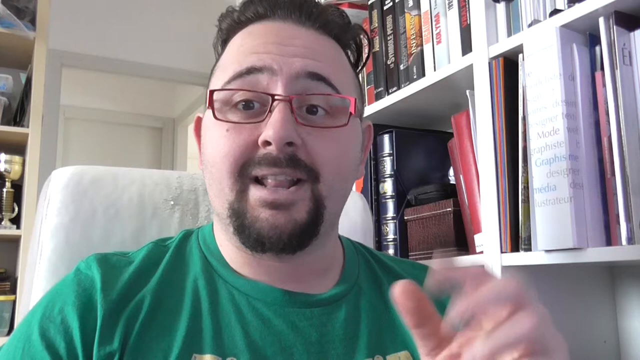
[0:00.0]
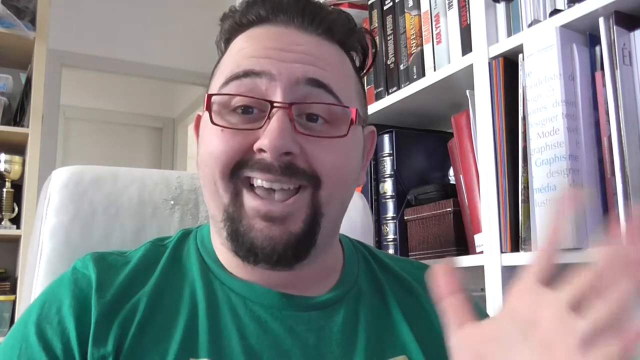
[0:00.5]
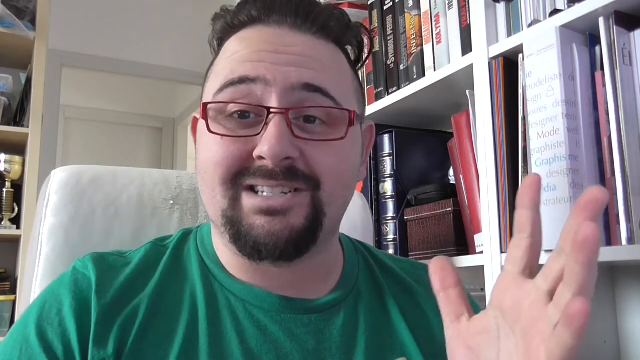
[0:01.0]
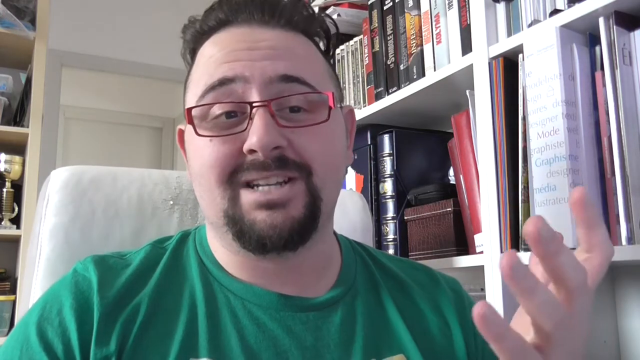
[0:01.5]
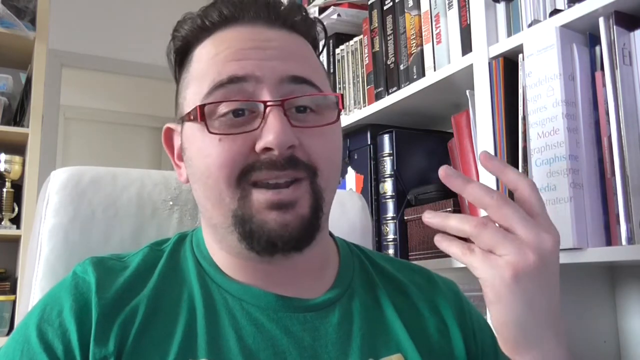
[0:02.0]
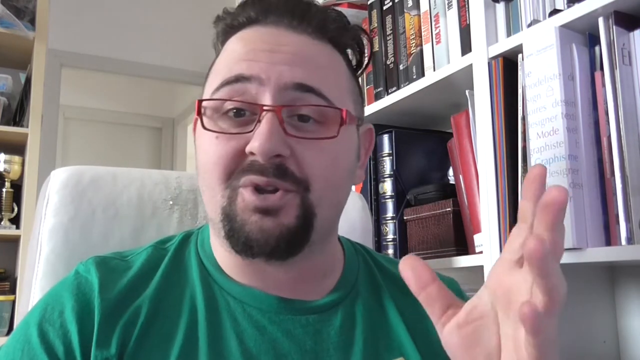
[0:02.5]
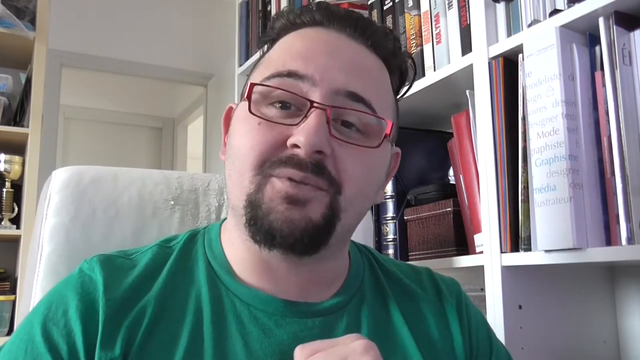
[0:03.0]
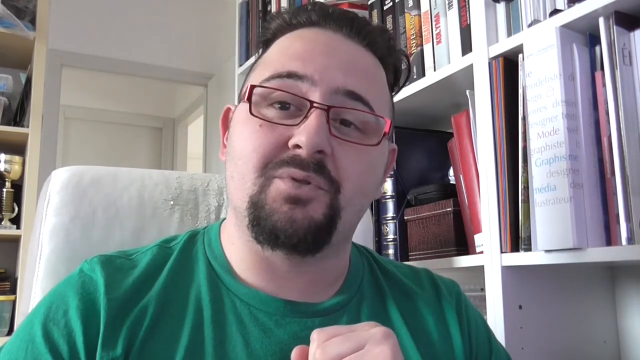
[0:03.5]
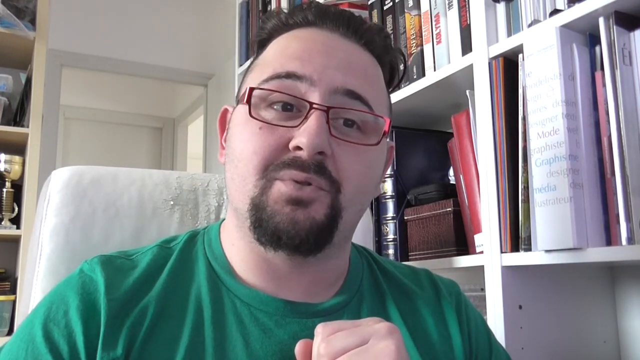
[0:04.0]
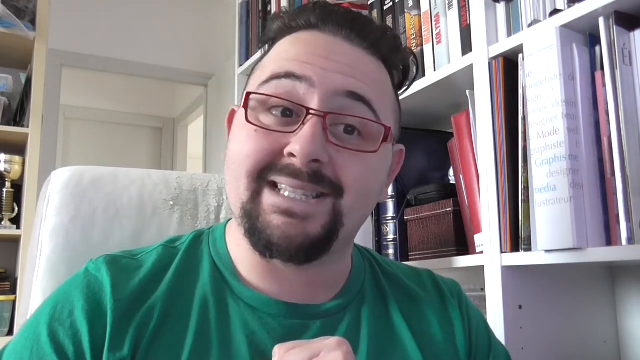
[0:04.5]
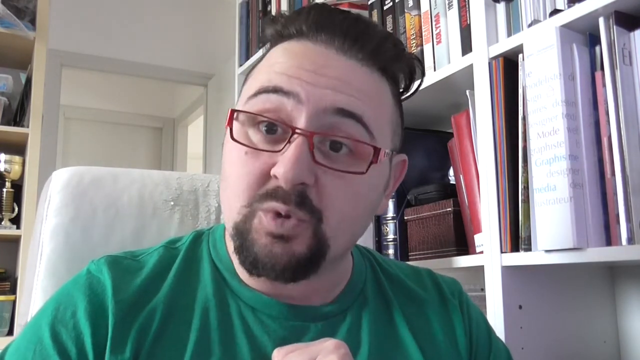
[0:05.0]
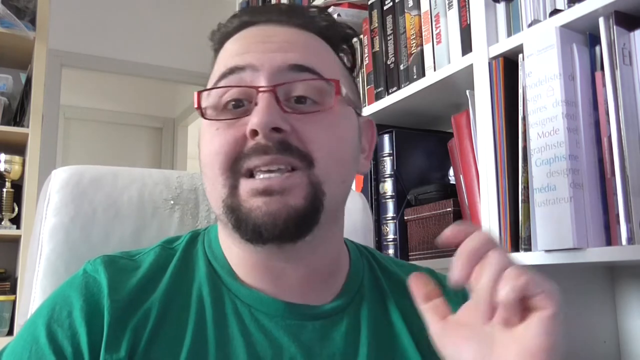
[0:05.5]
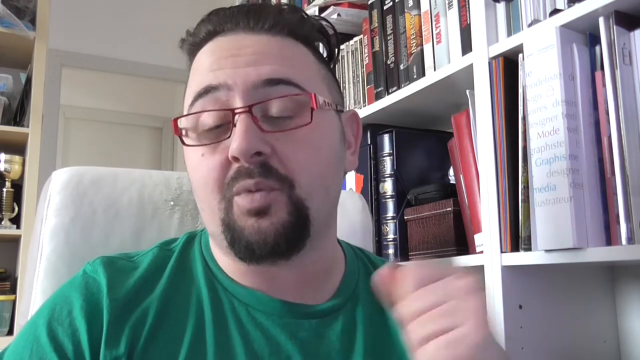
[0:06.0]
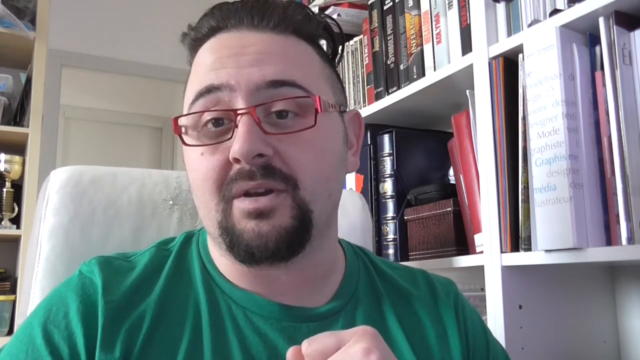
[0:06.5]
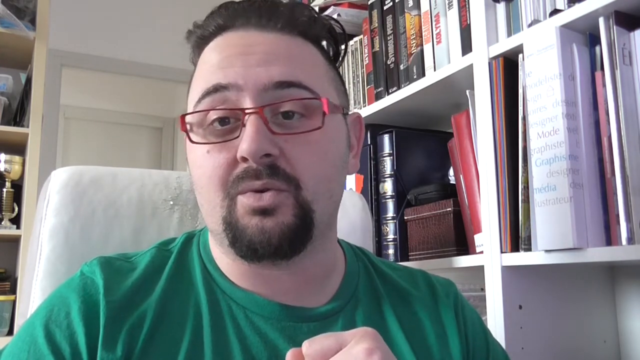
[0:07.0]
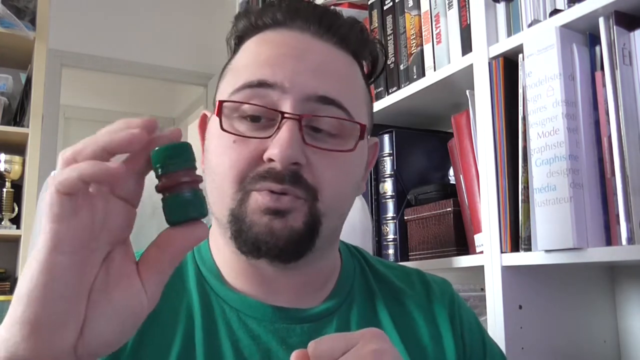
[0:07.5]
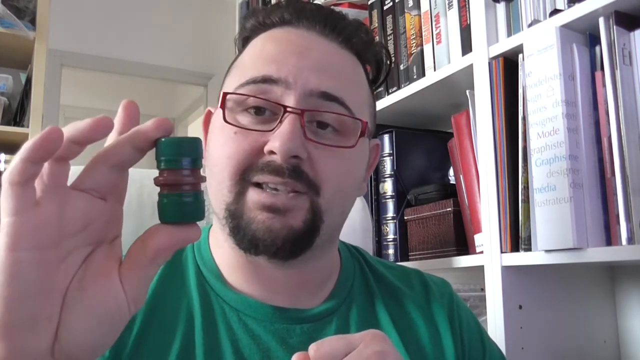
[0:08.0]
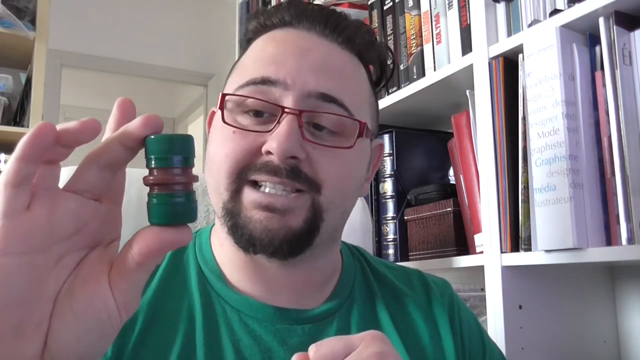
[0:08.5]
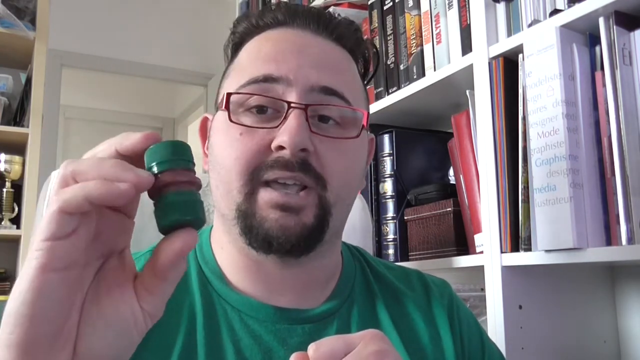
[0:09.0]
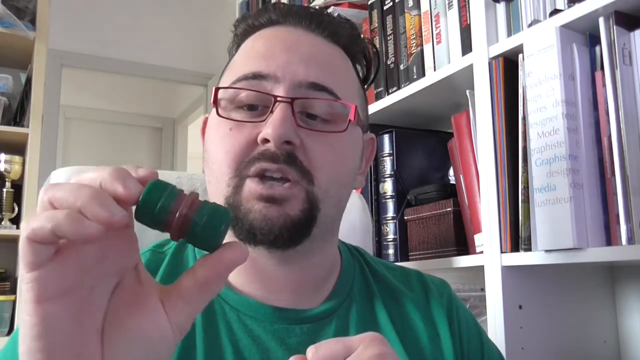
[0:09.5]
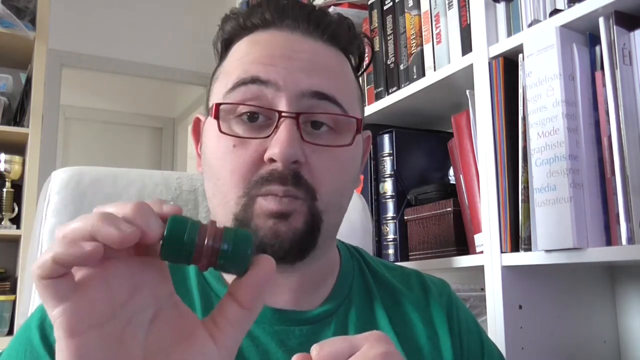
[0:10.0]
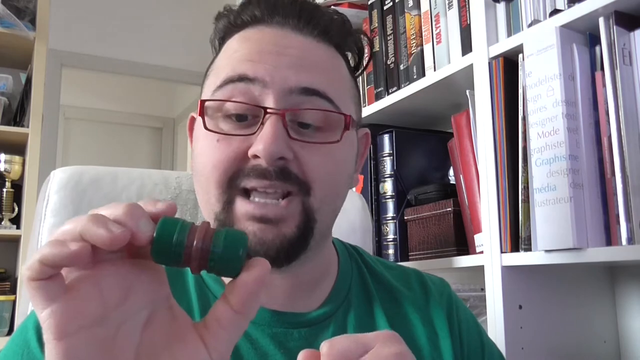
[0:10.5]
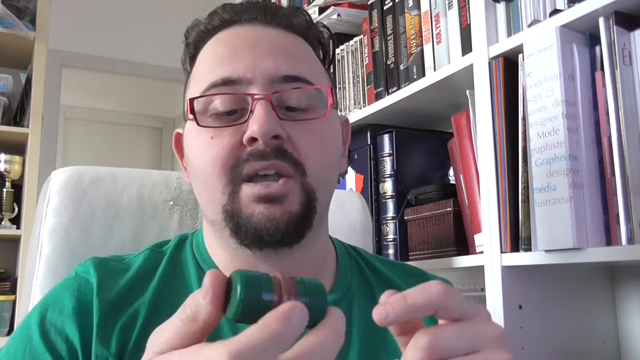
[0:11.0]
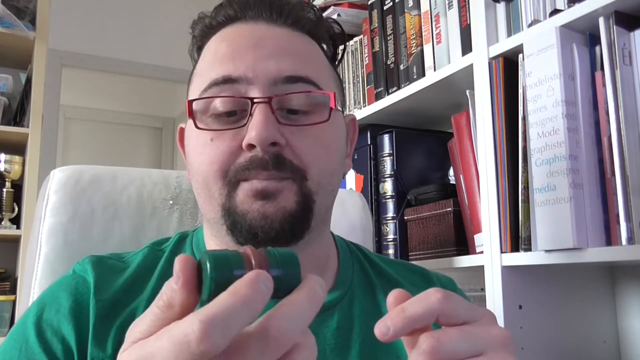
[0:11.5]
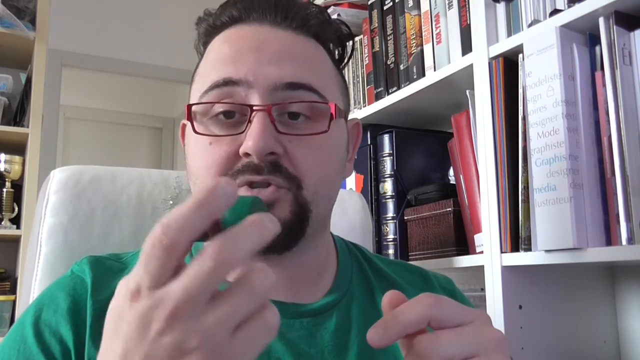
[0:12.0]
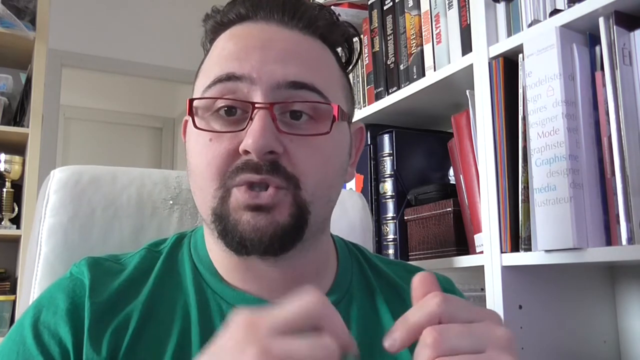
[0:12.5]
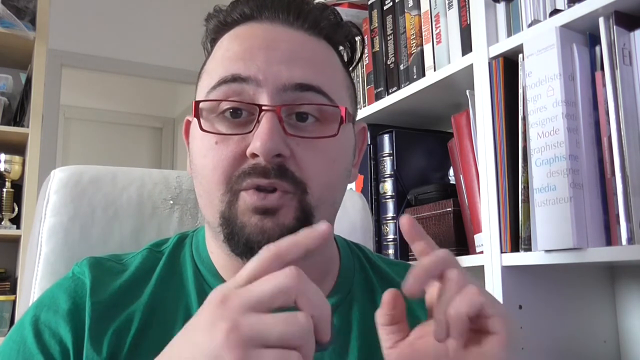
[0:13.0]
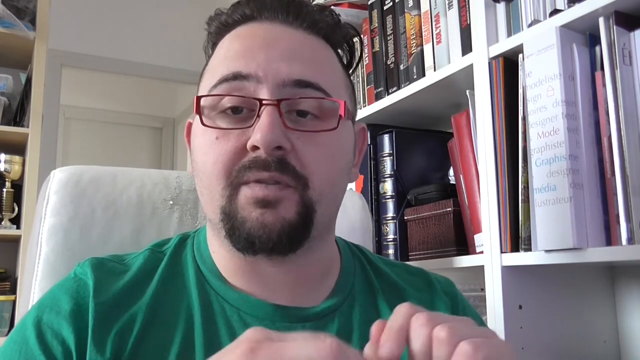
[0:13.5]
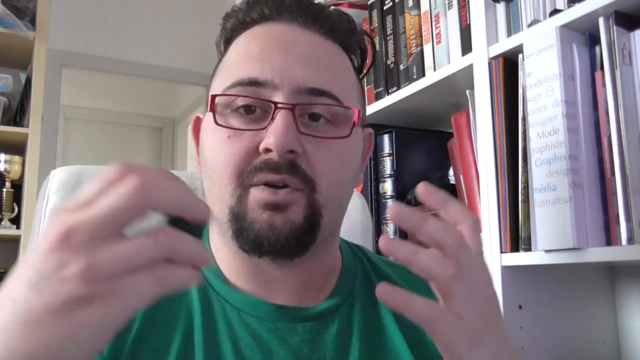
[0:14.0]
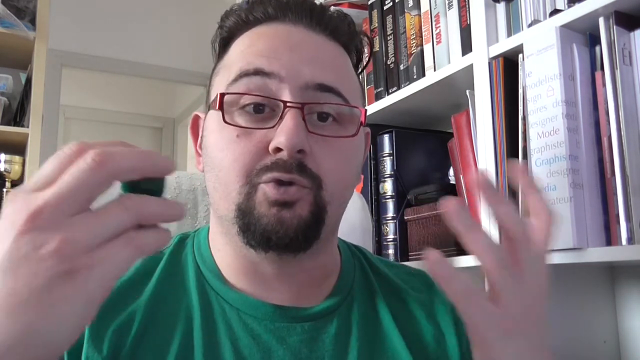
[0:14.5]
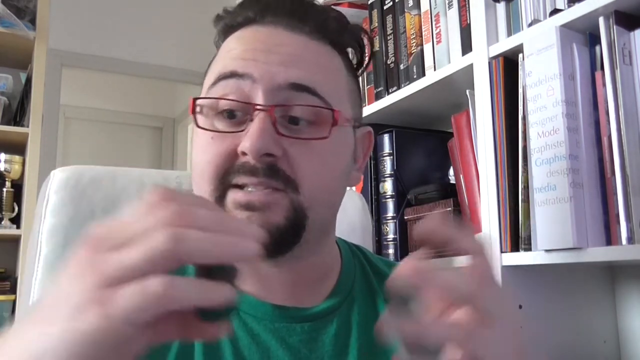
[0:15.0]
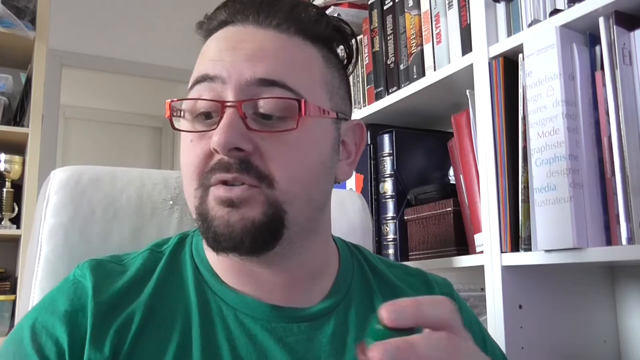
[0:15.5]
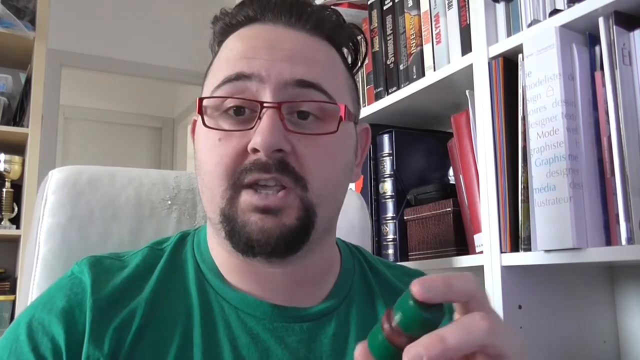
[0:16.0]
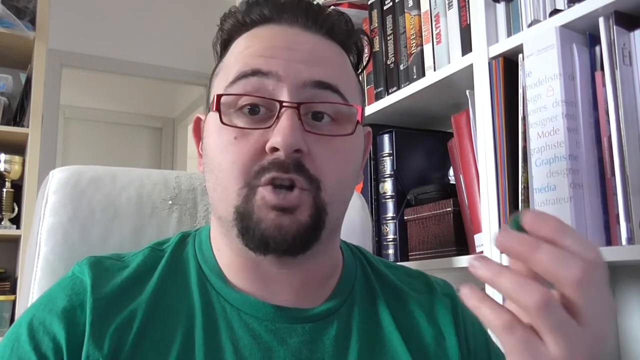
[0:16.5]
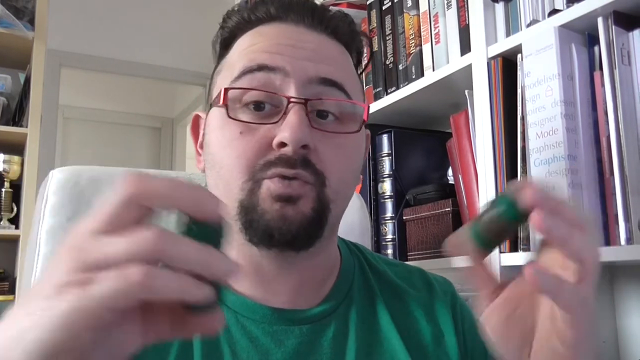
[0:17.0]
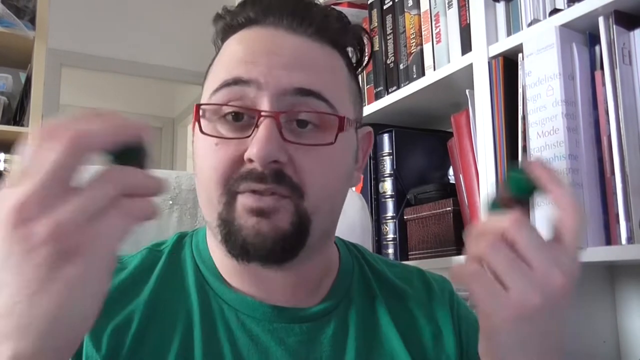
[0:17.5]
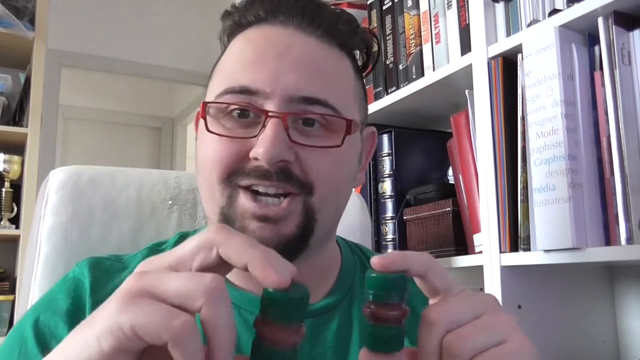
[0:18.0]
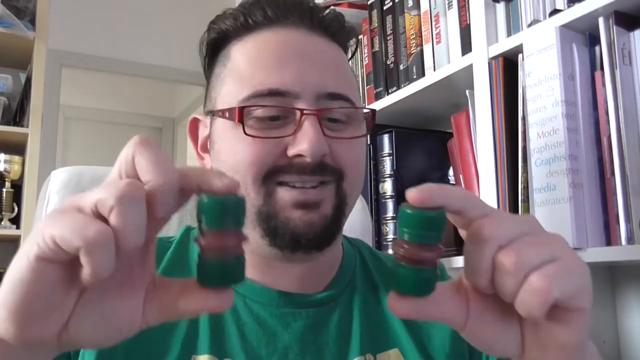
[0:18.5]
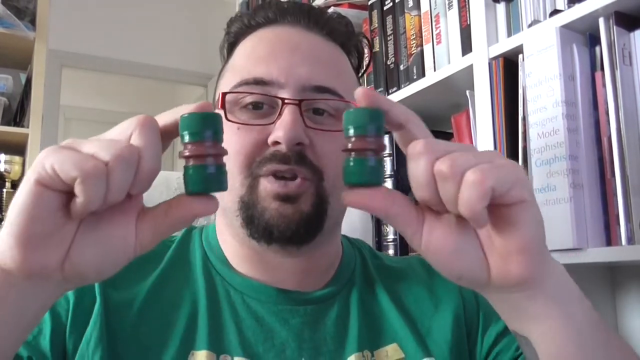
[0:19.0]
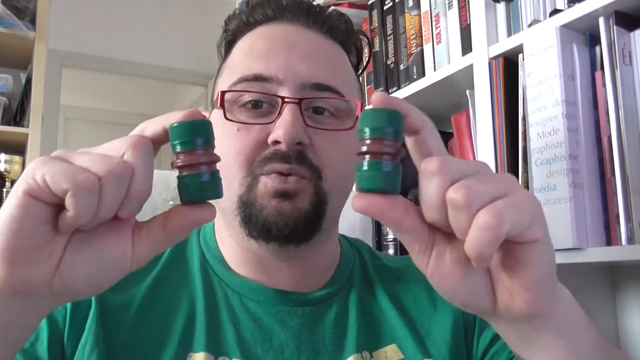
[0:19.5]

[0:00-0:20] A man talks inside a house, showing something he created with a Coke bottle lid. There are books on his other side. He has a neat haircut, wears spectacles, and is recording himself as he works. He looks like he is enjoying what he is doing.